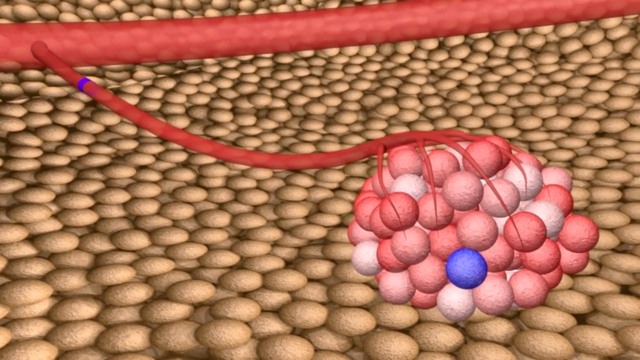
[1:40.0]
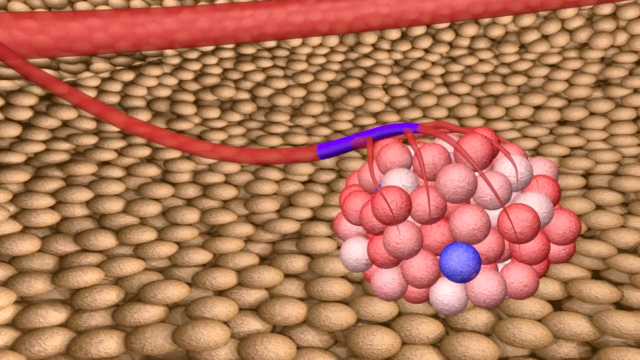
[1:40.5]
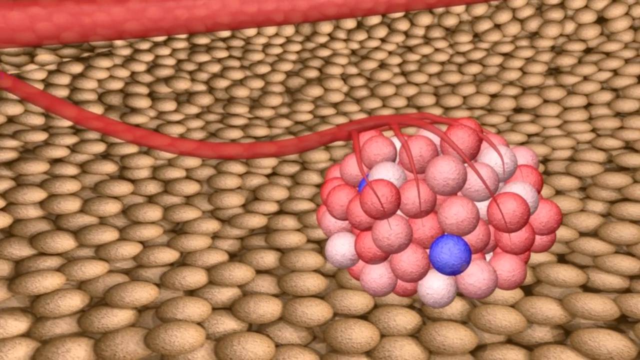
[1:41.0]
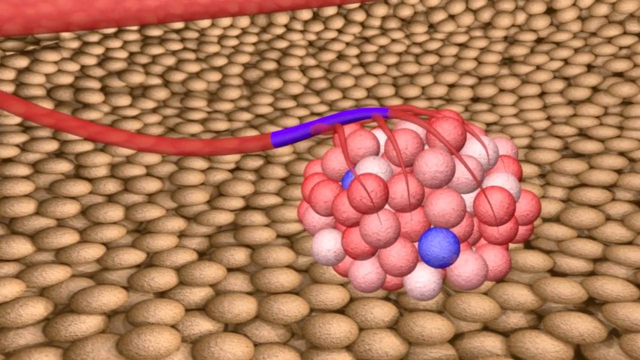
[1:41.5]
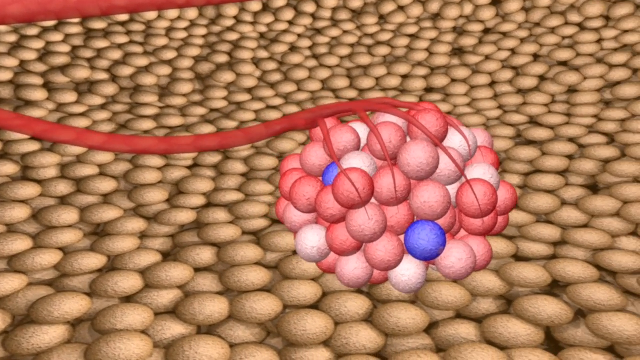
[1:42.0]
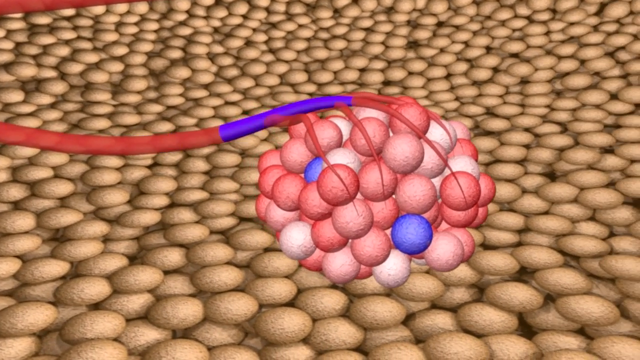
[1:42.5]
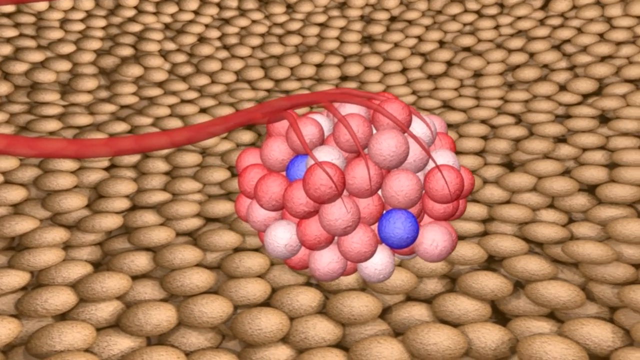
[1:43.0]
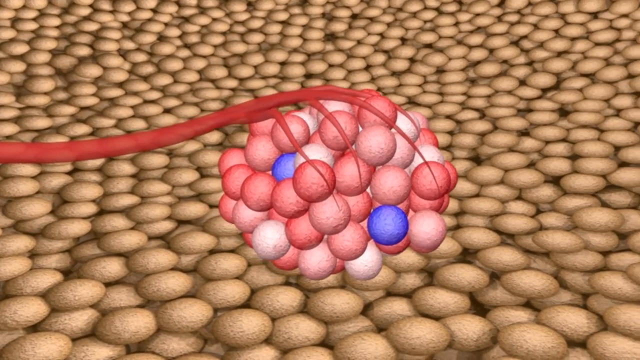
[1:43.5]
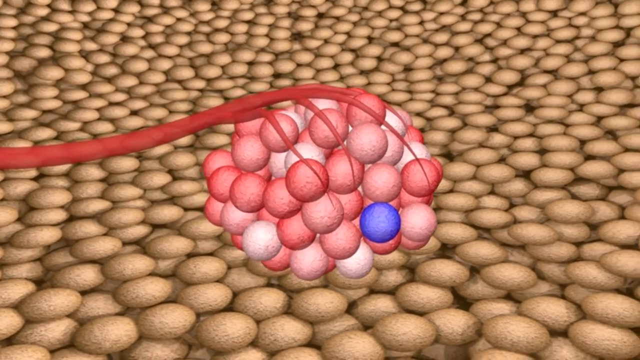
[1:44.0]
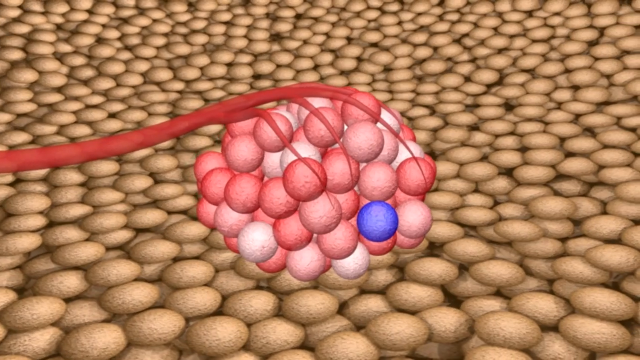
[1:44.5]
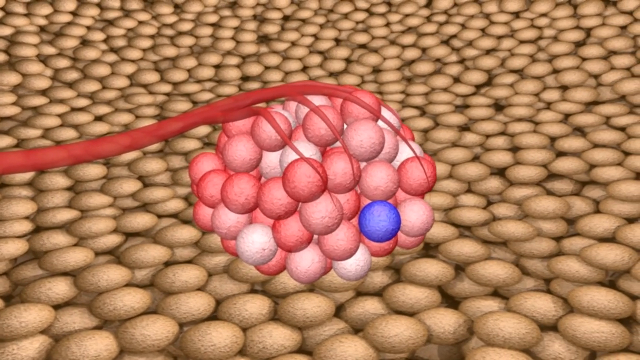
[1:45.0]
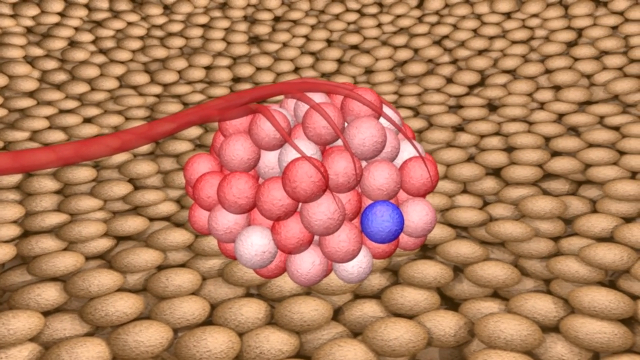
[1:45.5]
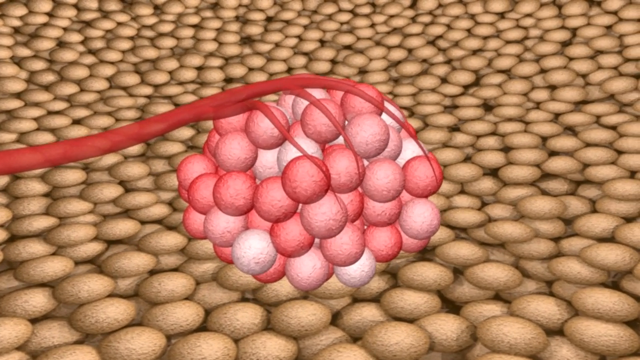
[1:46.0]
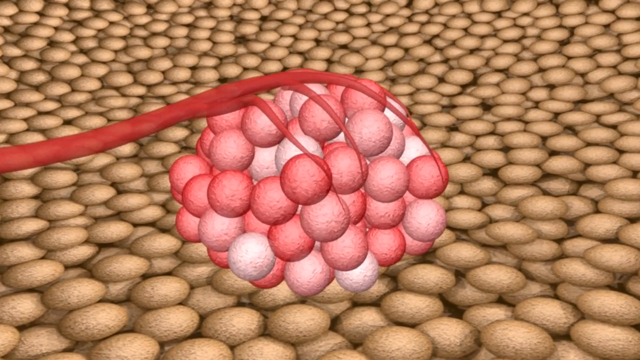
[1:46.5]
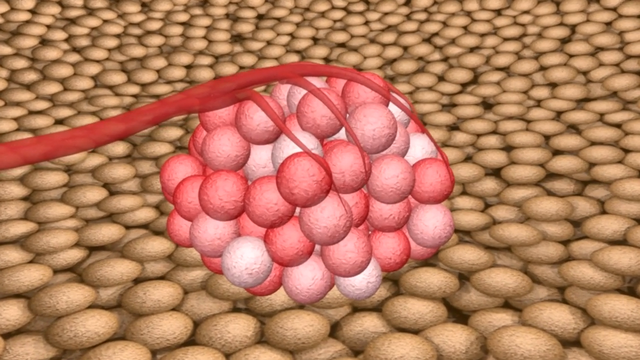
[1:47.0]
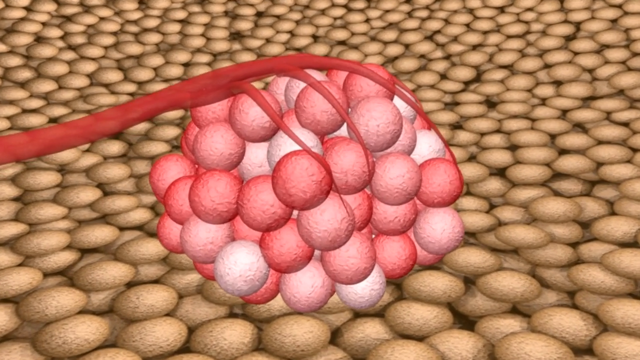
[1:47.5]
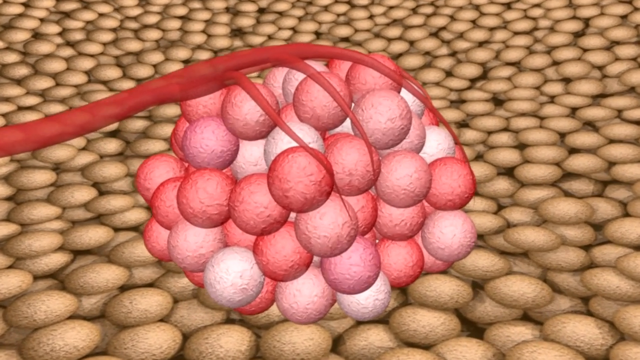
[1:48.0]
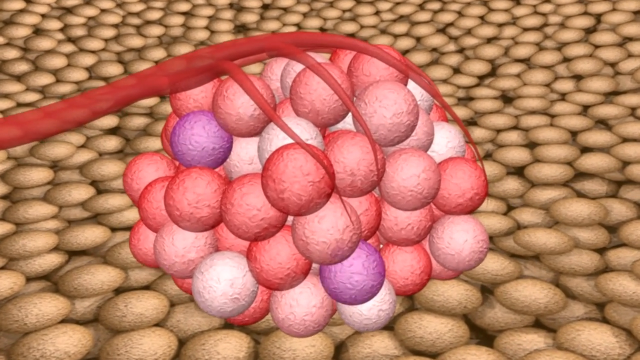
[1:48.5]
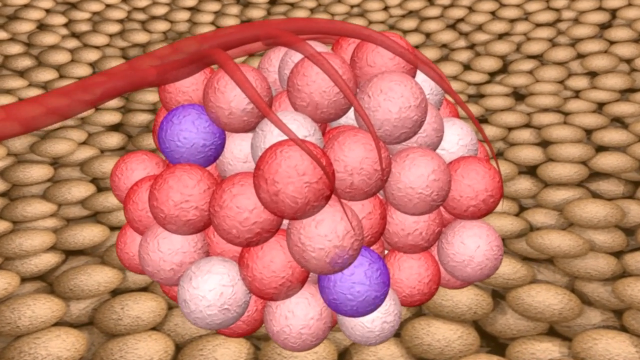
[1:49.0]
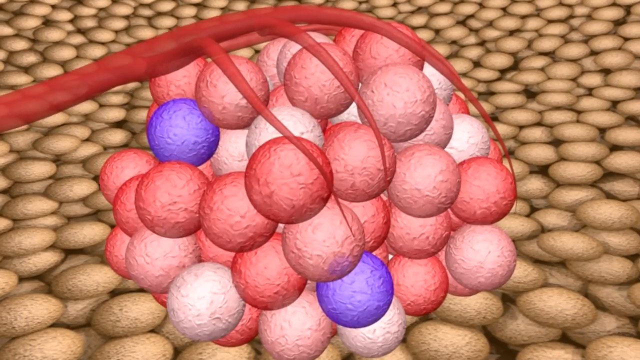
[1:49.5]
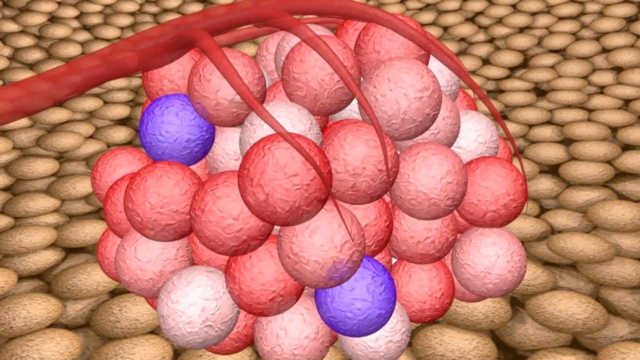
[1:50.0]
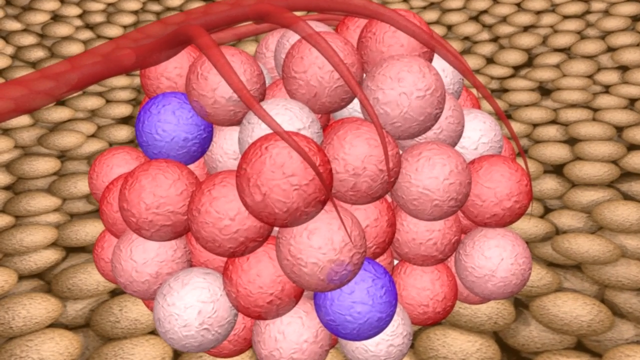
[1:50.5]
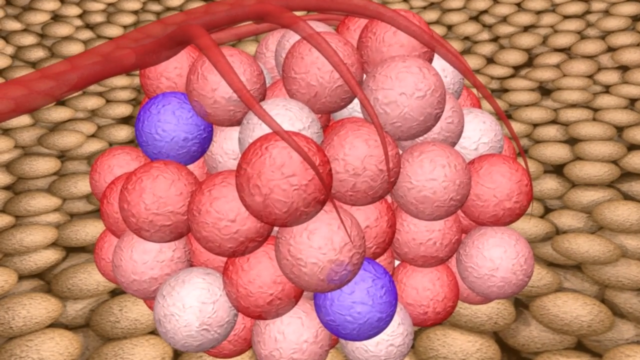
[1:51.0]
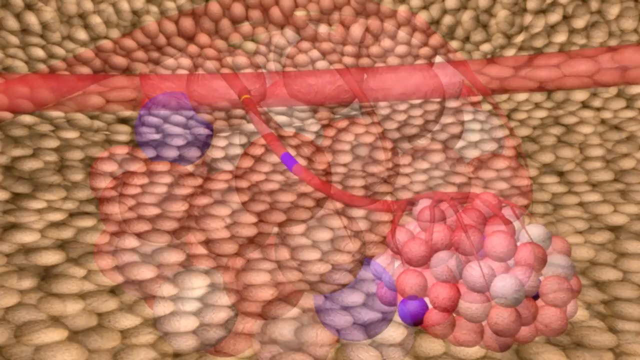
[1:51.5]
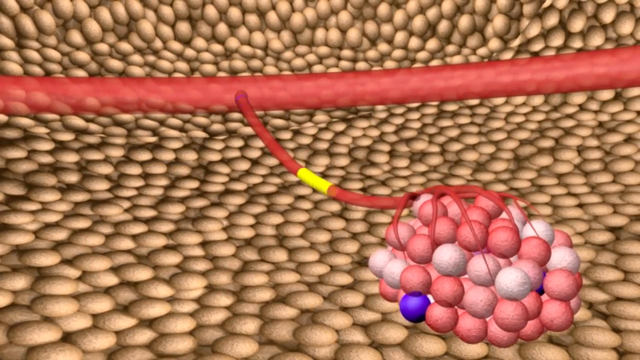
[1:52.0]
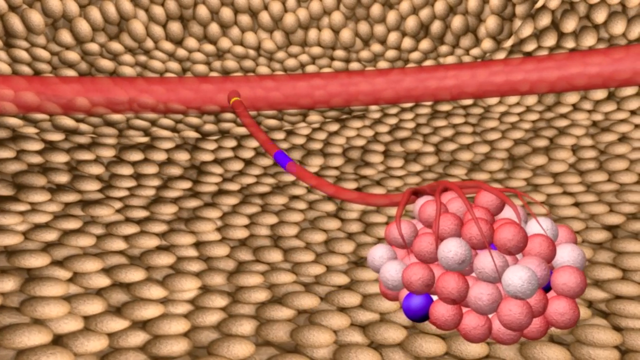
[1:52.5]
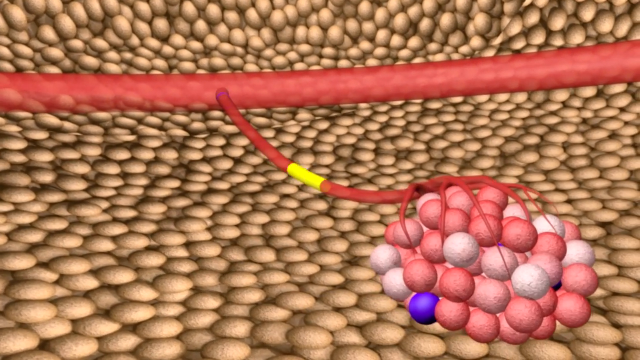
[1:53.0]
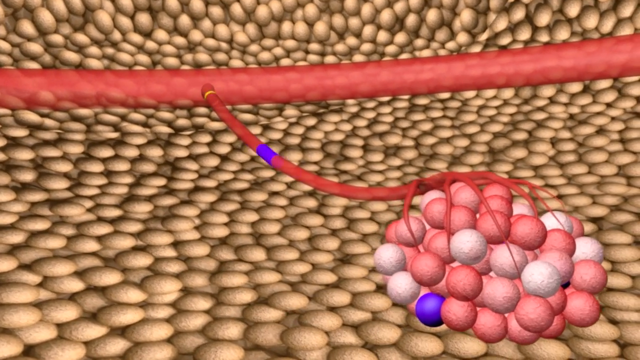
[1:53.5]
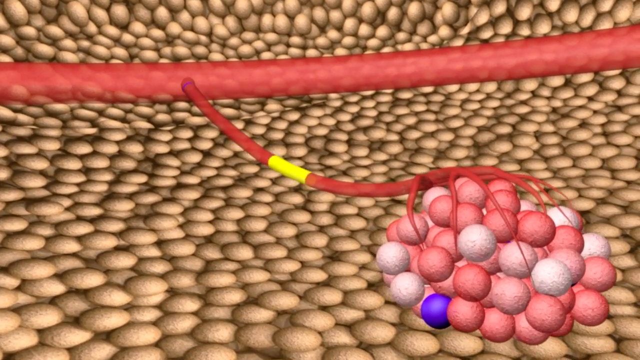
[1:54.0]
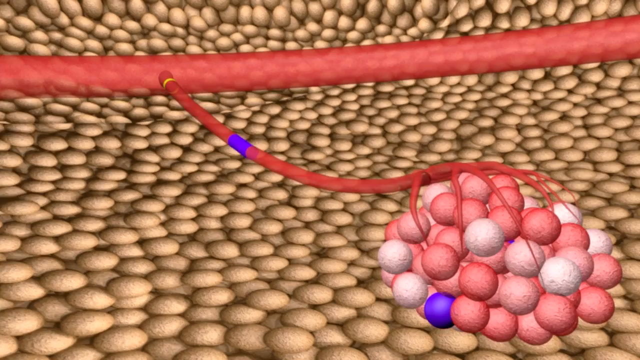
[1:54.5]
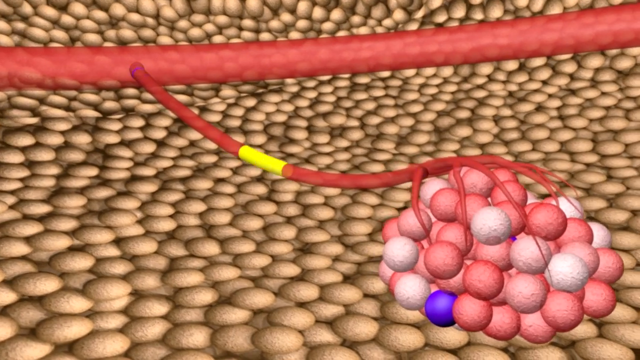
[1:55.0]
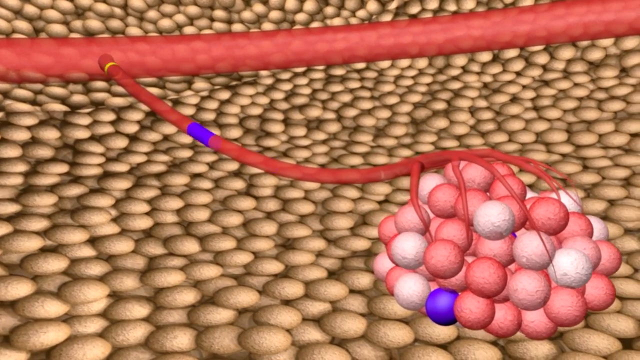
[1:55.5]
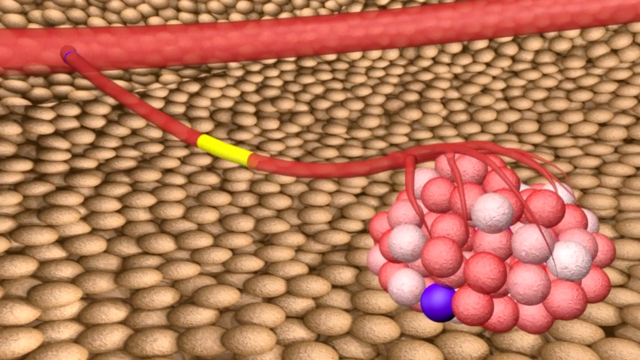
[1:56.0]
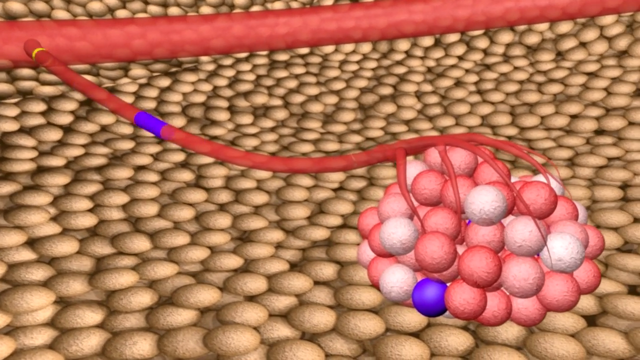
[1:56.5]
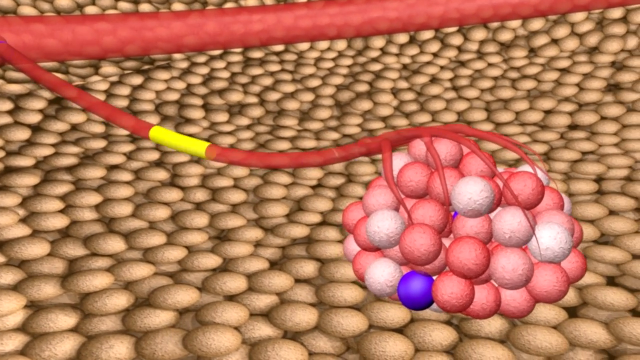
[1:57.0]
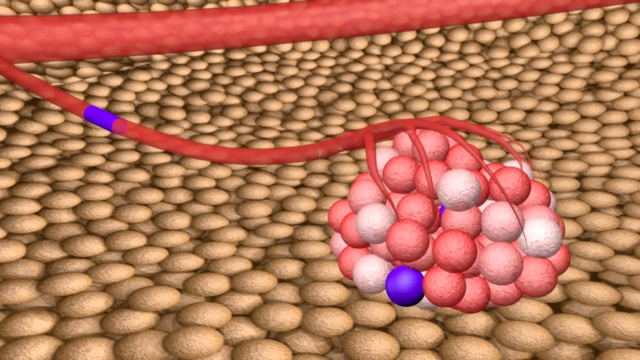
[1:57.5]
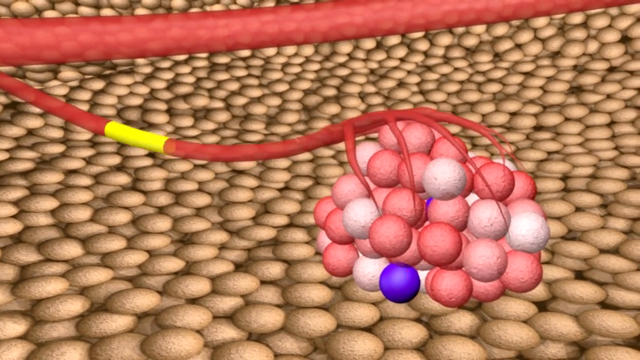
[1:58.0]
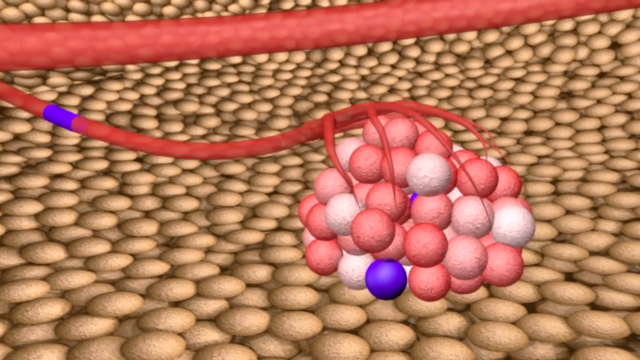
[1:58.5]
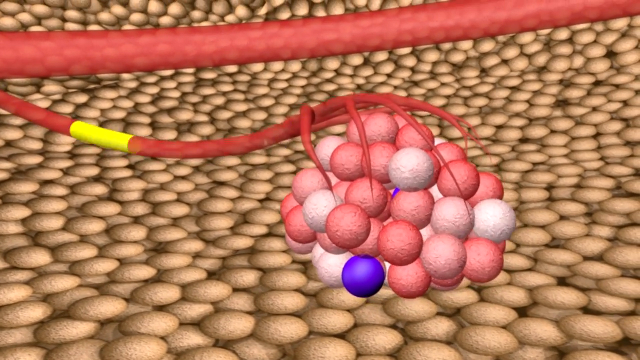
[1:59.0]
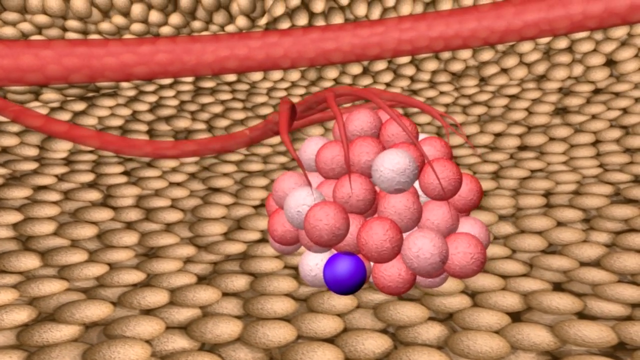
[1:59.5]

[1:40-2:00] The larger tumor that has grown after the smaller one was removed is shown connected to the smaller blood vessel, which is connected to the larger one in the back. Tan-colored walls are still visible in the background of the tumor and veins. This time, instead of a yellow light going down the center, there is a blue light. The blue light goes into the top of the cells and the blue cells are removed from the mass. Afterward, two new blue cells appear; the red balls that were encasing the tumor are the ones that turn into the two new blue balls. The yellow and blue lights then alternate going down the center of the vein into the tumor, and the mass gets smaller and smaller.